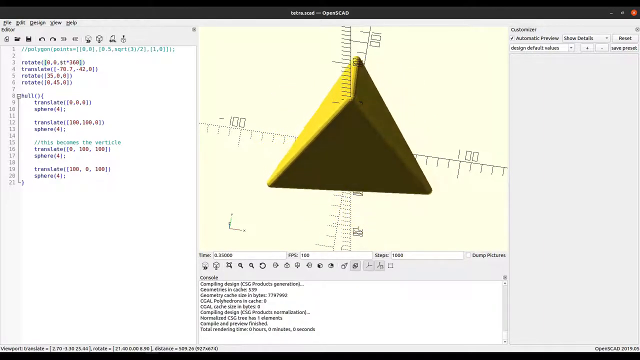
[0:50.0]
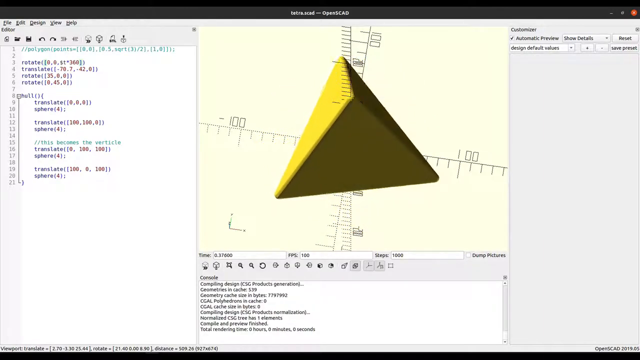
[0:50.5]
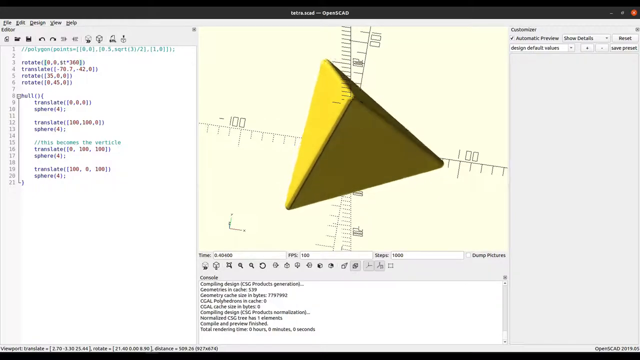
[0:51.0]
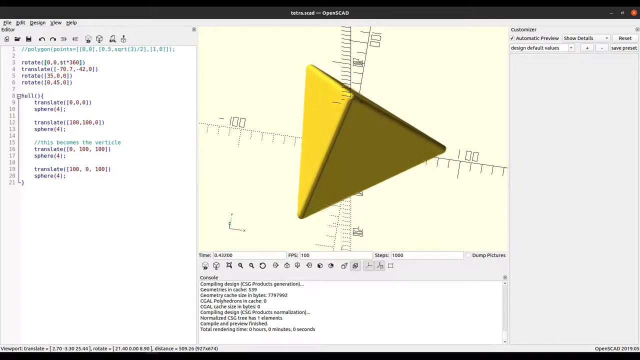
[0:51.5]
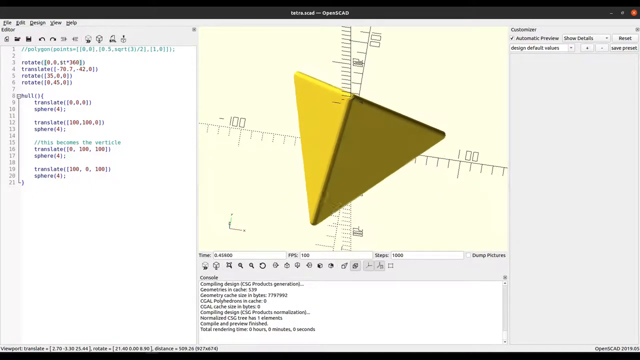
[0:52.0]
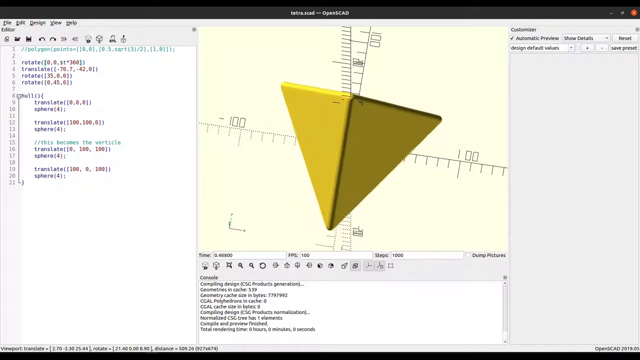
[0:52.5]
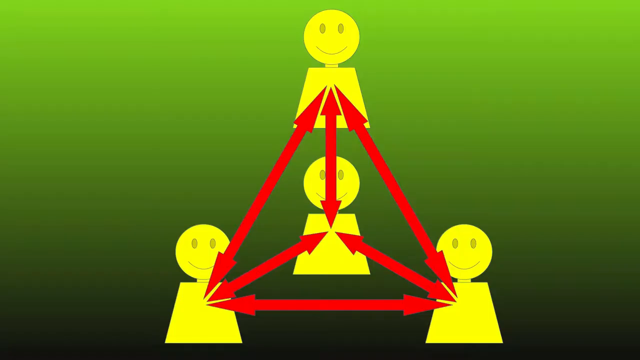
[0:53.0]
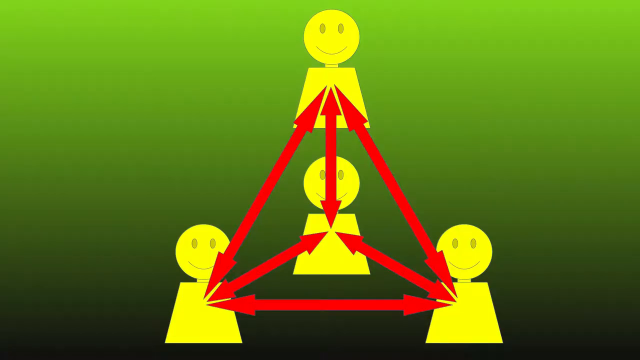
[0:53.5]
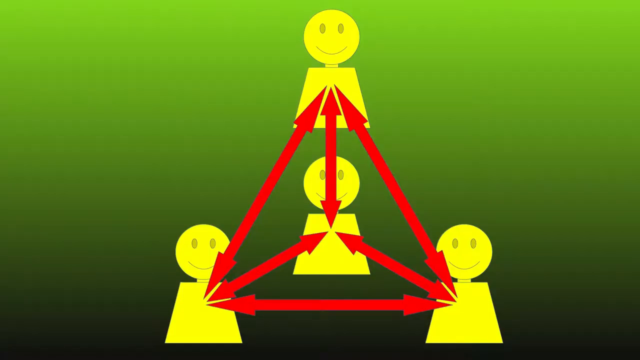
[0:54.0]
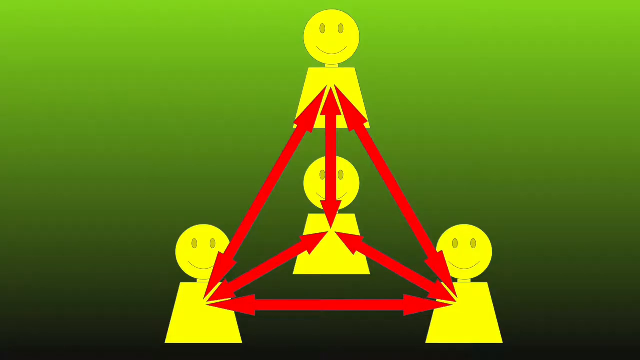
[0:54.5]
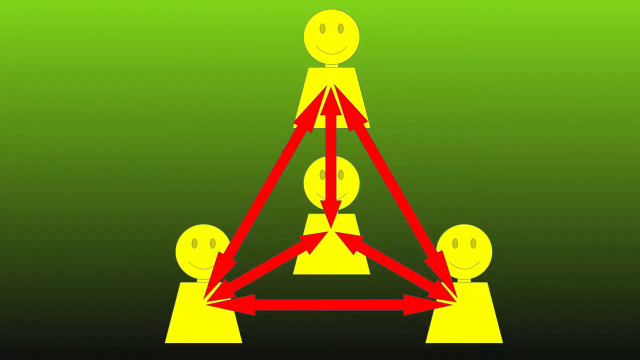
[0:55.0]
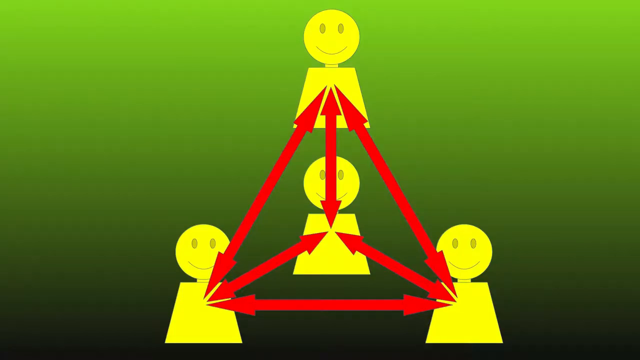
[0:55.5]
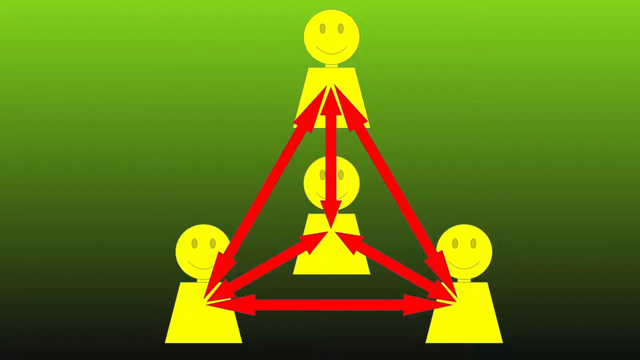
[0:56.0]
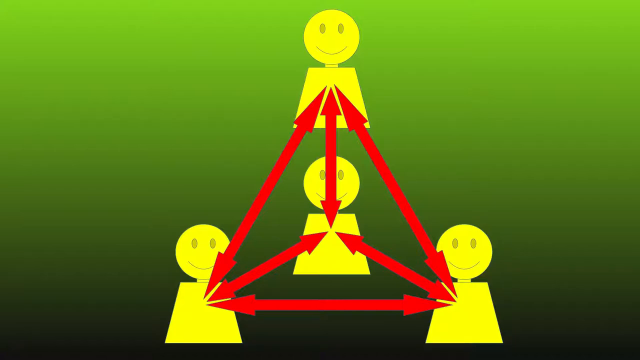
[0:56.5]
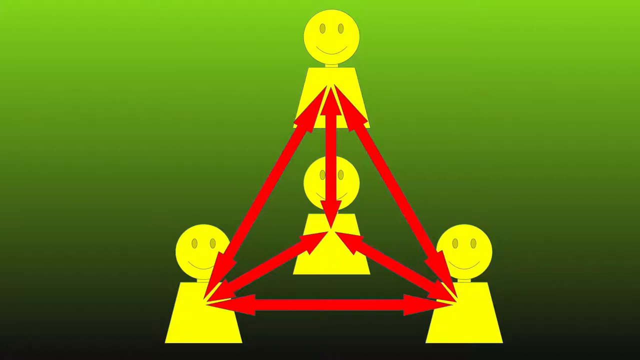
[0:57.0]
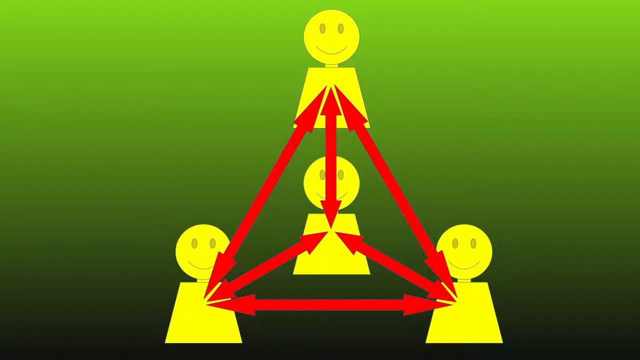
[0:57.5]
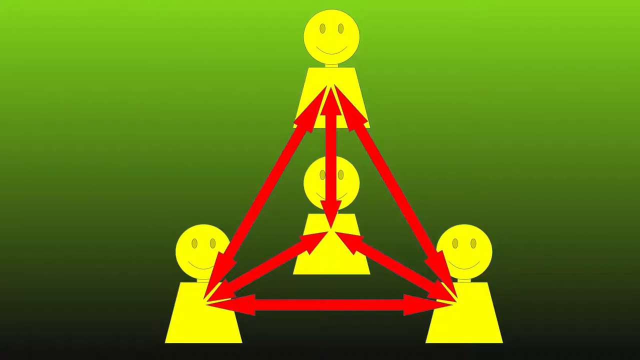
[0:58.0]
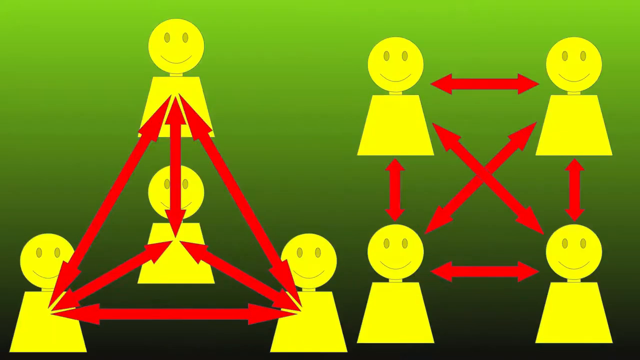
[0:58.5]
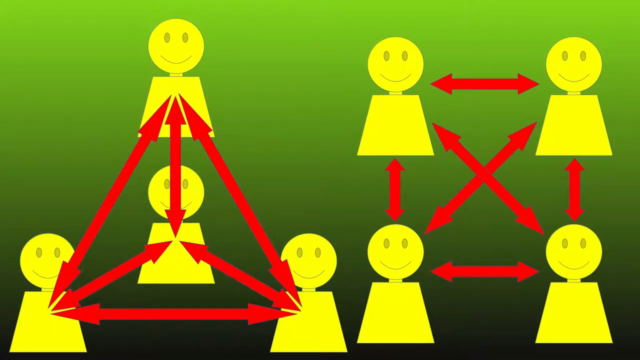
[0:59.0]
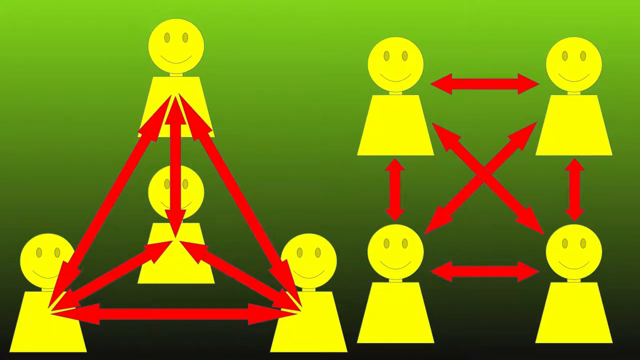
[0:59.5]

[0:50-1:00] OpenCAD is shown at the top of the page. A yellow 3D triangle spins in place in the center of the screen, while information about the triangle and a console are on the sides. The view changes to a solid green background showing four simple figures with arrows between them, the four figures placed at the four points of a triangular prism. That diagram moves over but remains on the page as a new diagram of four people appears, this time placed more simply: one at the top right, one top left, one bottom right and one bottom left, with arrows connecting each to the others.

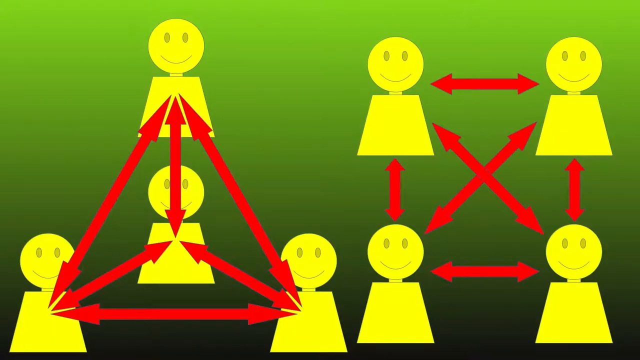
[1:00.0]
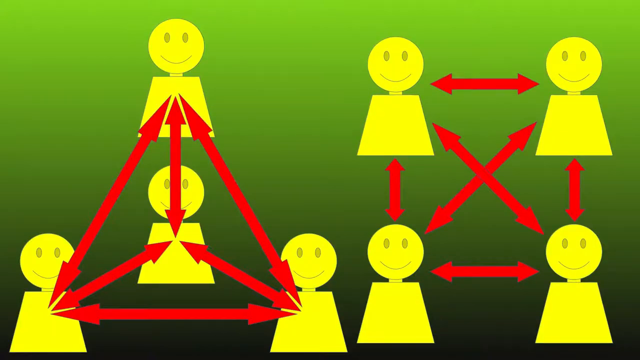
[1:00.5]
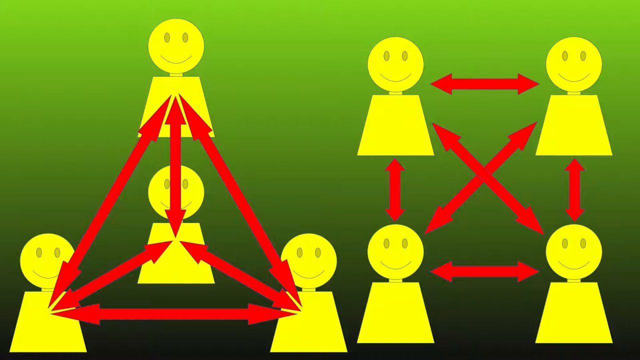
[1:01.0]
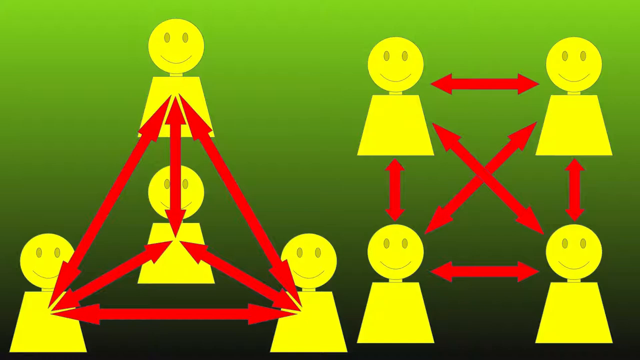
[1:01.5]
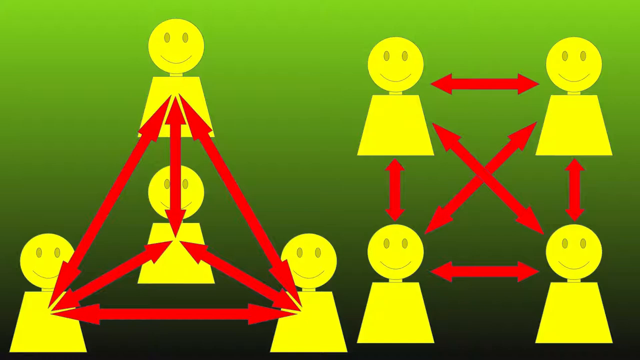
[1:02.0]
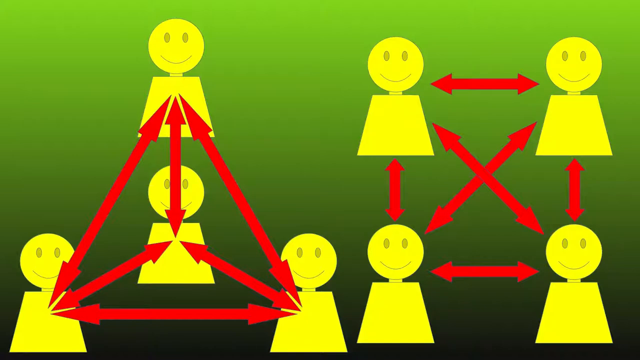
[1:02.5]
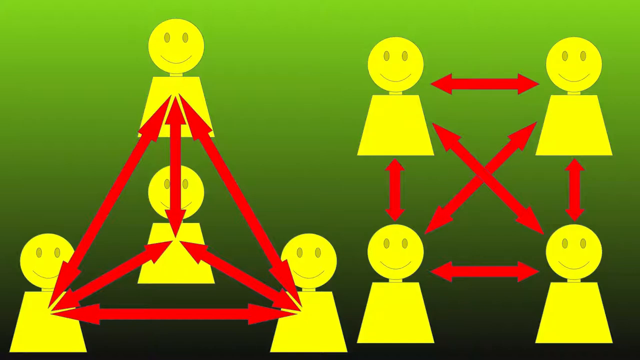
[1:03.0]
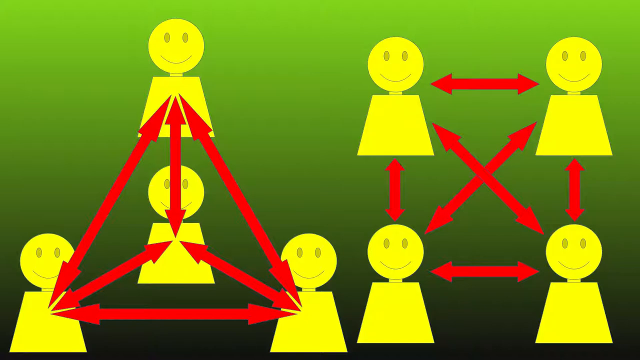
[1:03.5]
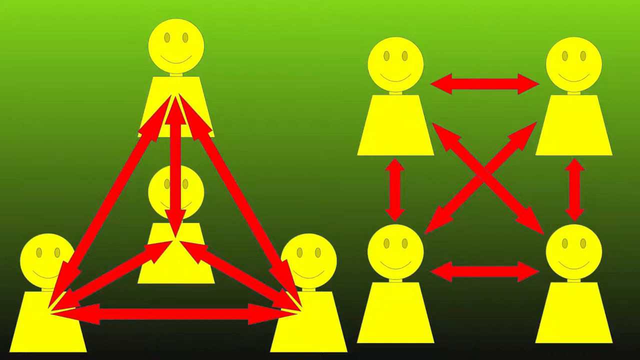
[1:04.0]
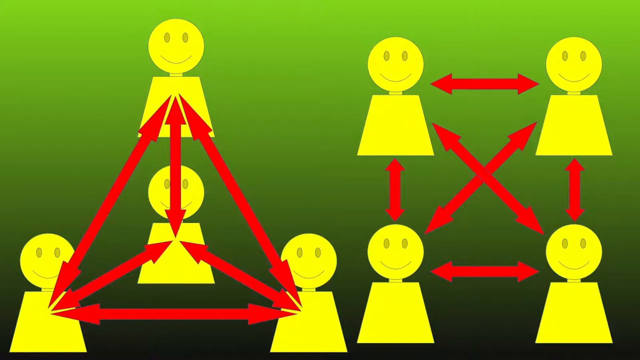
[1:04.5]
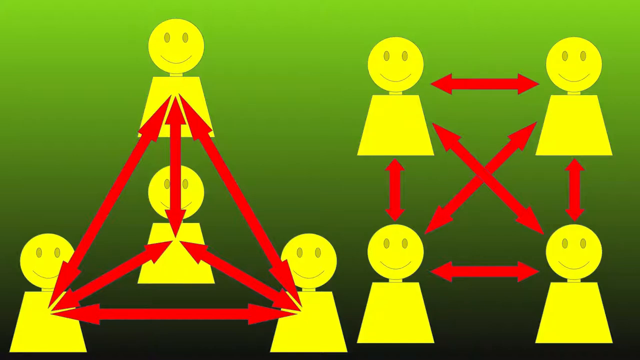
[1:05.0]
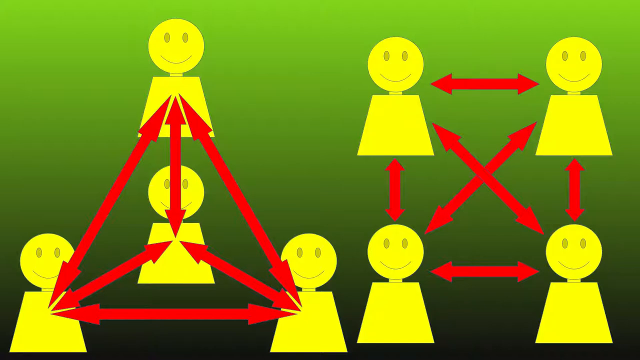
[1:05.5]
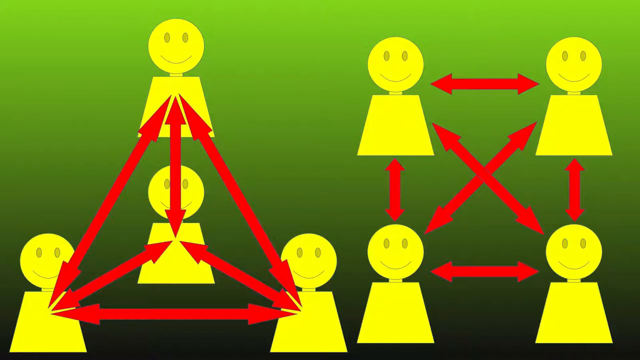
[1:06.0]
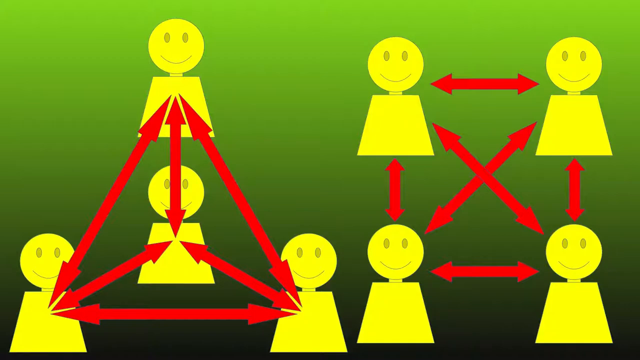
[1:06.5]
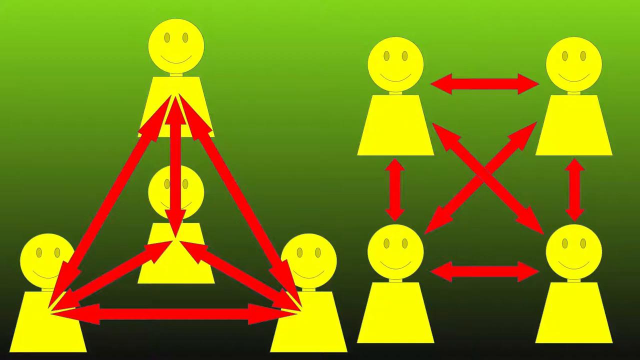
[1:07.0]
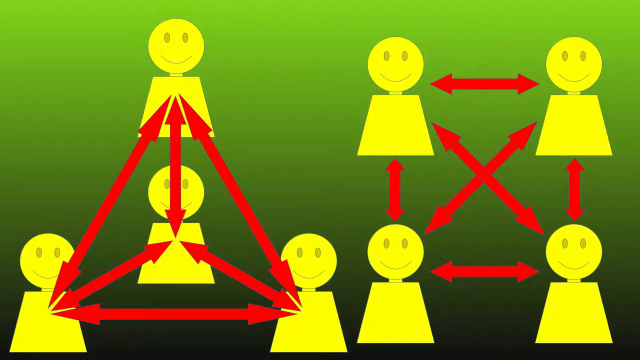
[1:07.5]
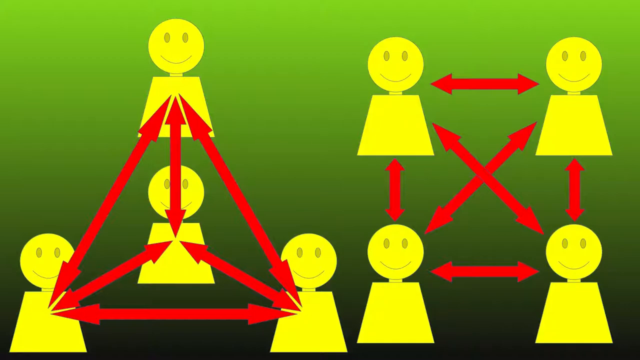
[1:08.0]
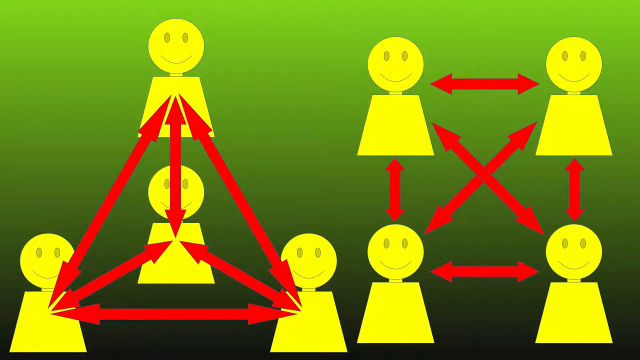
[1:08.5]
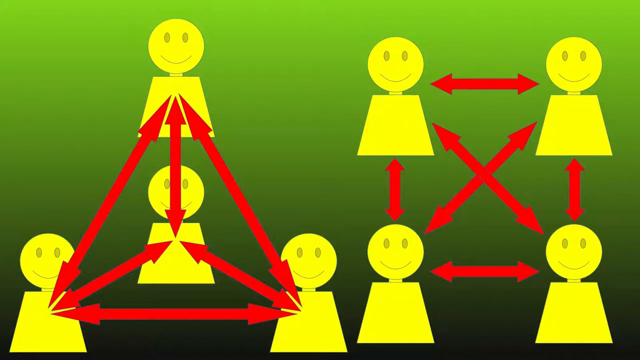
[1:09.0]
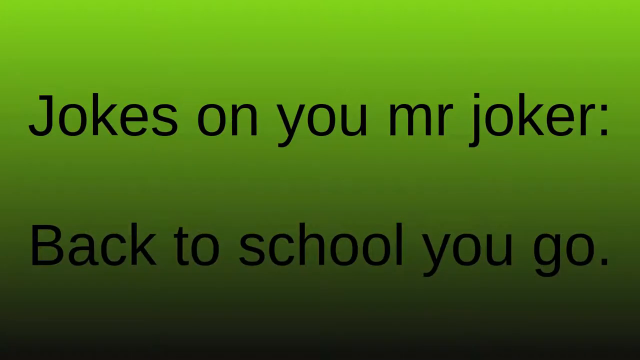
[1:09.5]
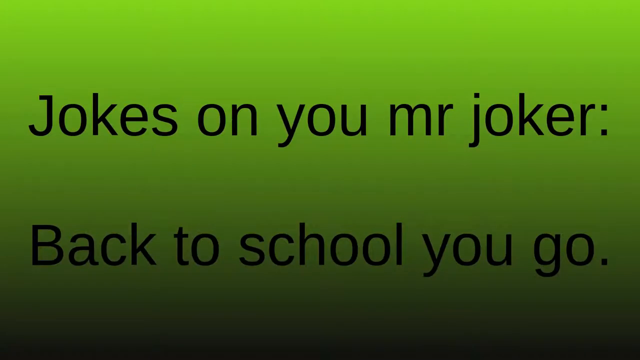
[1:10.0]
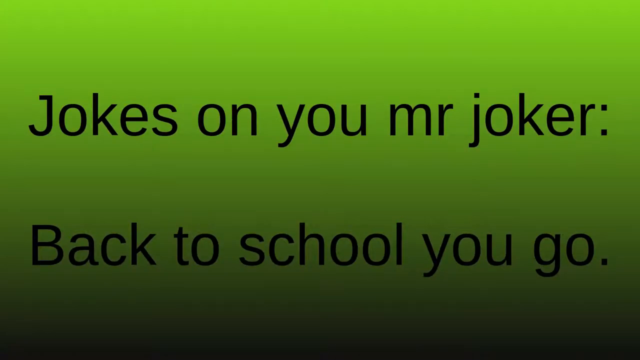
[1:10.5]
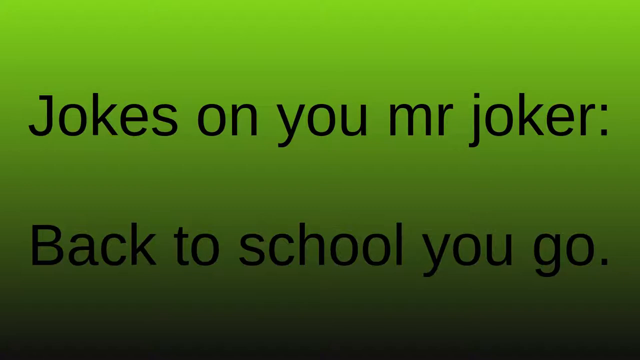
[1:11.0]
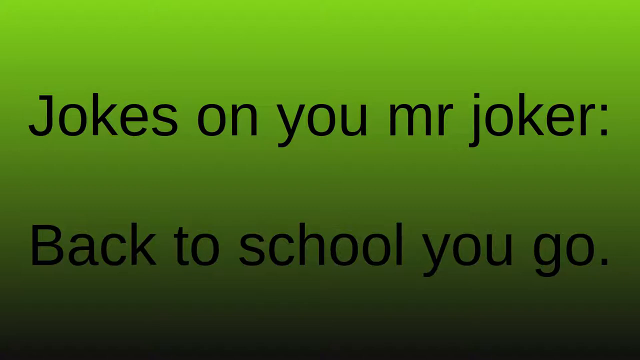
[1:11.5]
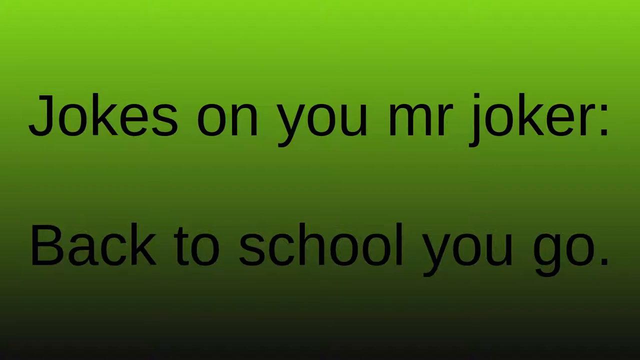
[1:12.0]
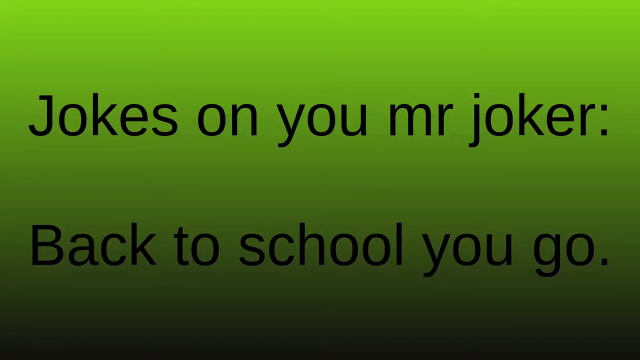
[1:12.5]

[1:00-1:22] A solid green background holds two separate diagrams. On the left, four people are placed so that they form almost a triangular prism, with one person at each point, and red arrows connecting each to the others. On the right, four people are placed more simply at the top left, bottom left, bottom right and top right of a simple square, with red arrows connecting each to the person below, above, and diagonally across from them. As the diagrams disappear, text appears that states, "Jokes on you mr joker: Back to school you go." It fades out to a black screen, which stays for a short while before the video ends.